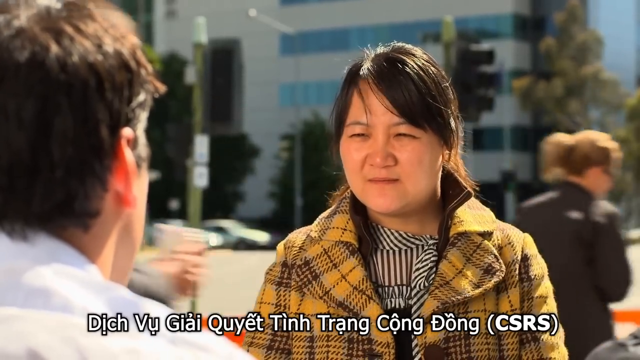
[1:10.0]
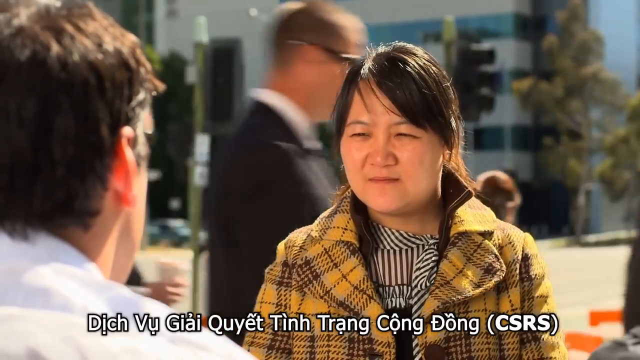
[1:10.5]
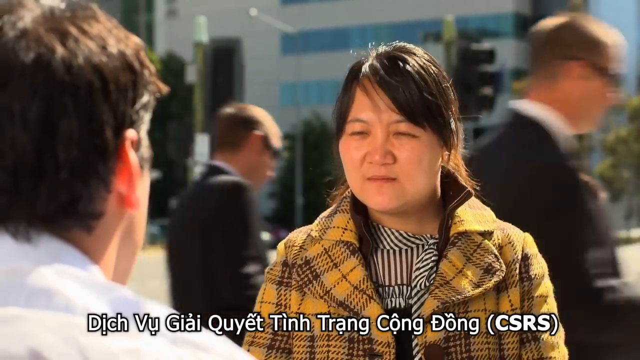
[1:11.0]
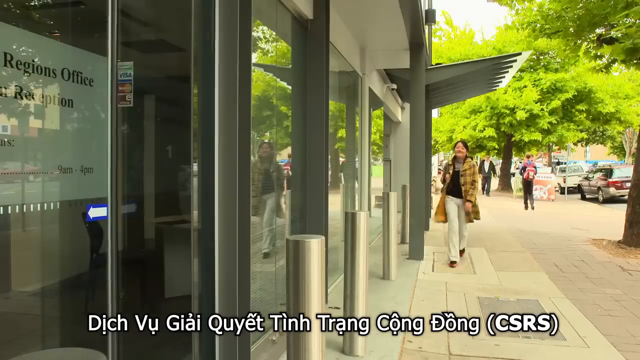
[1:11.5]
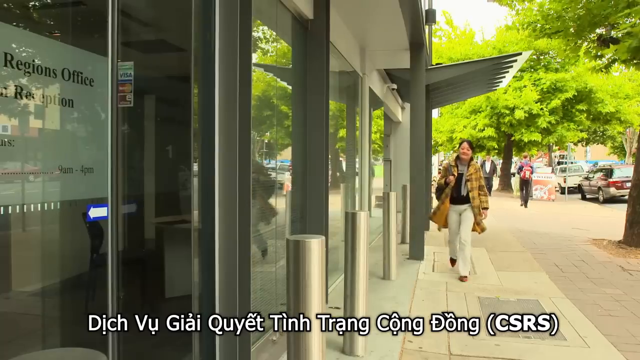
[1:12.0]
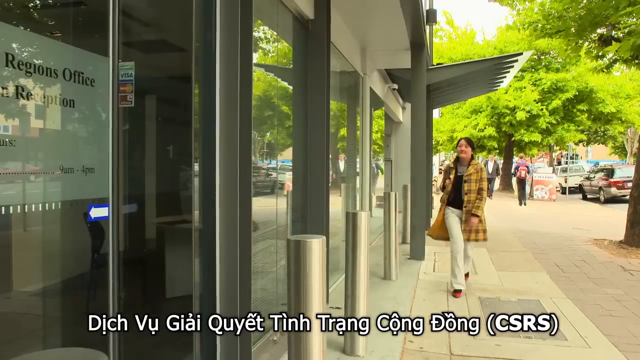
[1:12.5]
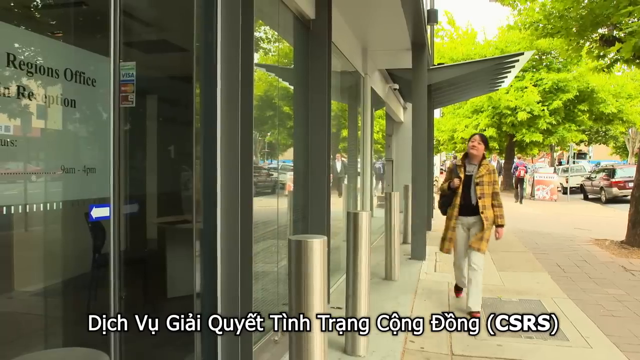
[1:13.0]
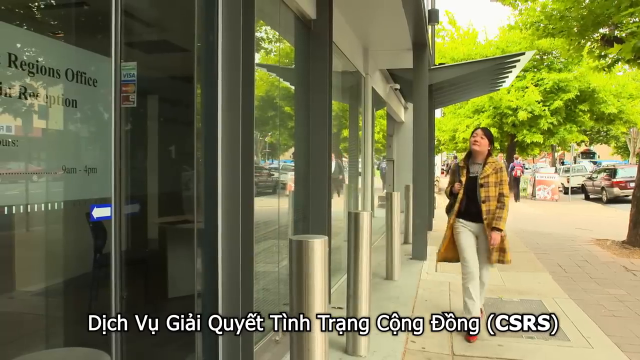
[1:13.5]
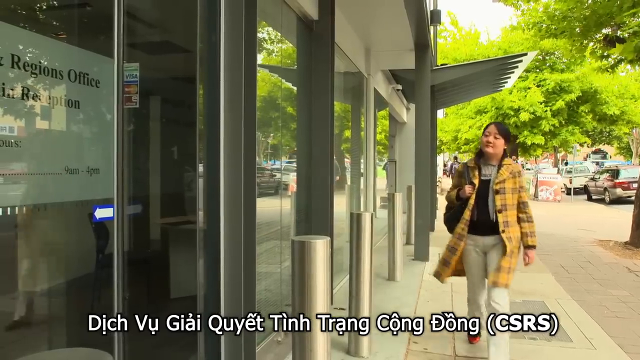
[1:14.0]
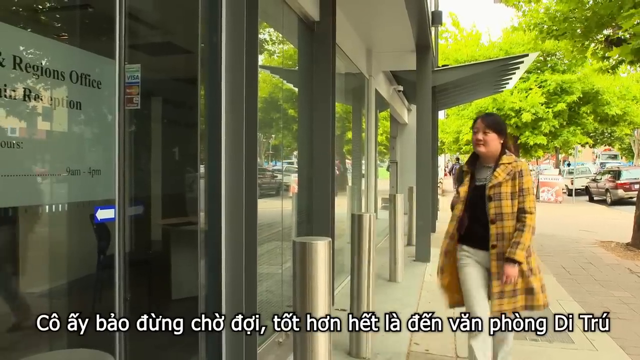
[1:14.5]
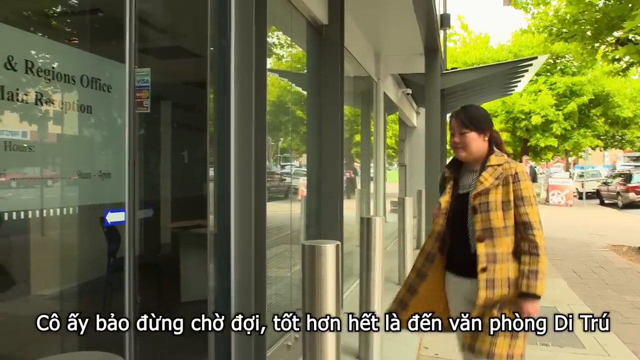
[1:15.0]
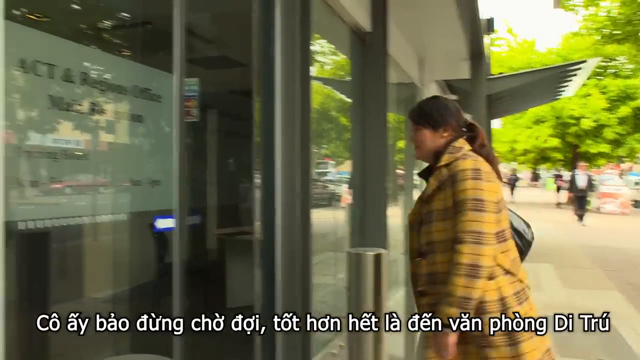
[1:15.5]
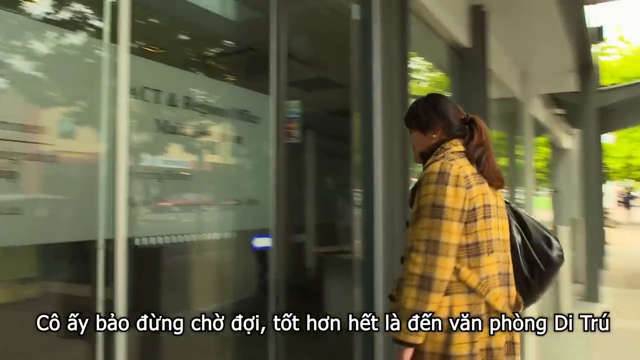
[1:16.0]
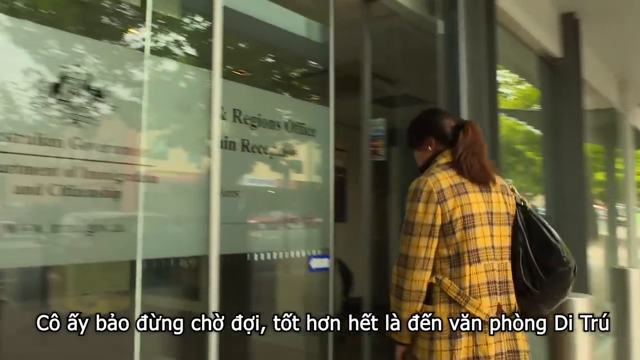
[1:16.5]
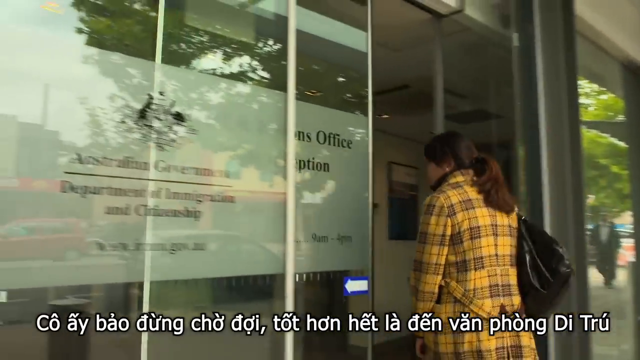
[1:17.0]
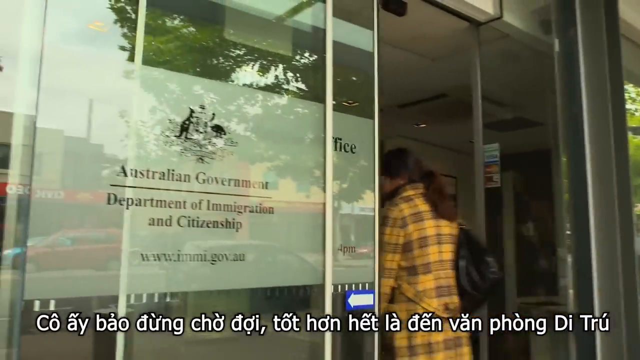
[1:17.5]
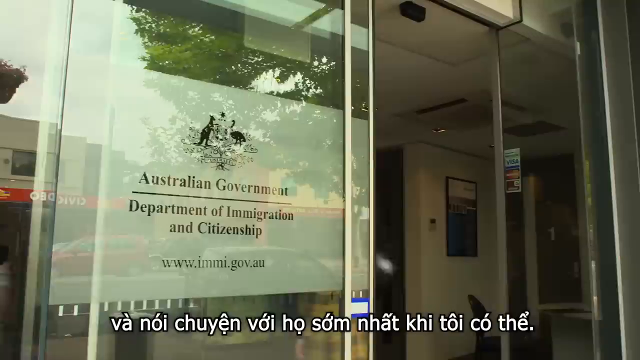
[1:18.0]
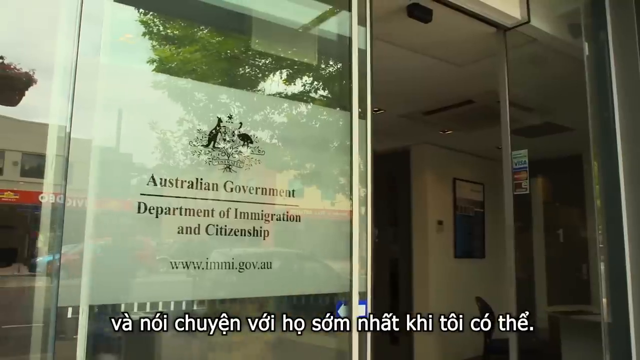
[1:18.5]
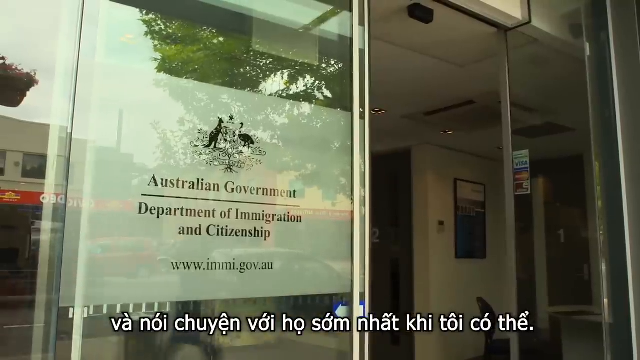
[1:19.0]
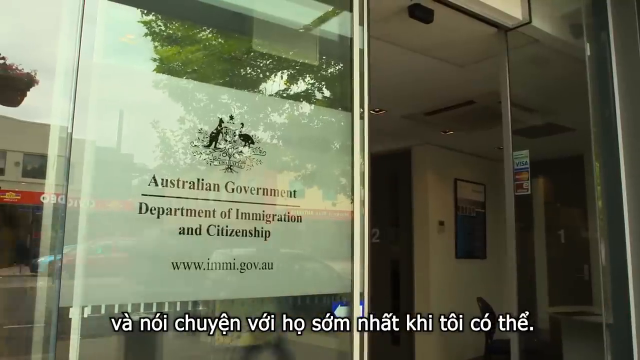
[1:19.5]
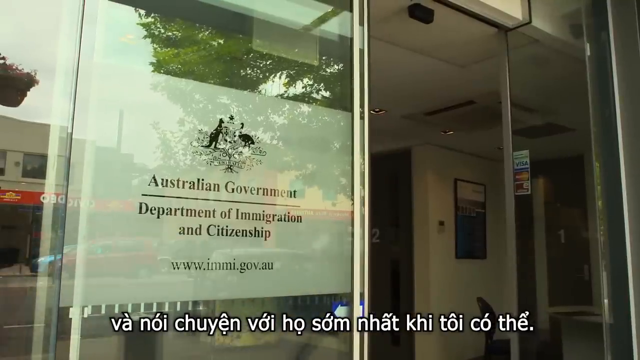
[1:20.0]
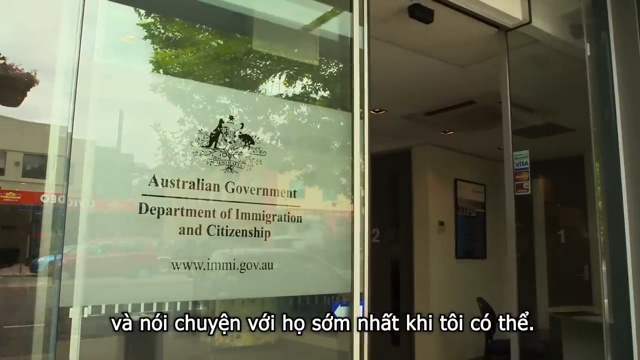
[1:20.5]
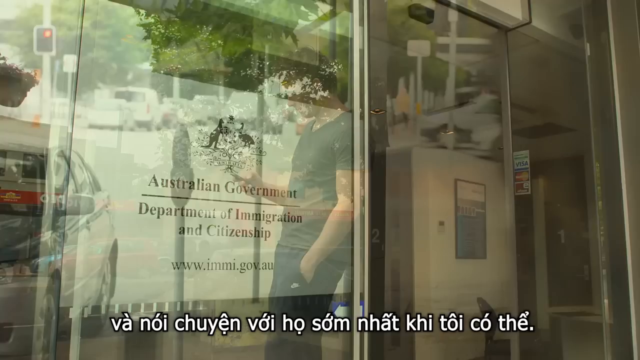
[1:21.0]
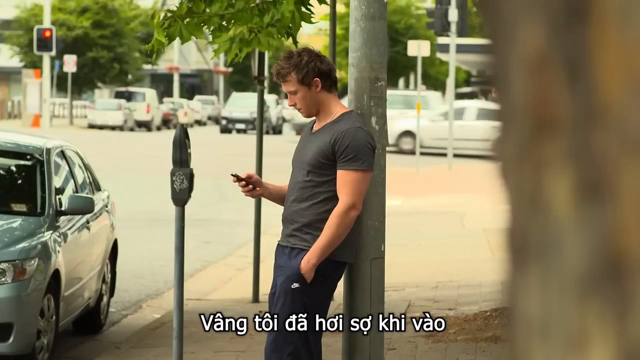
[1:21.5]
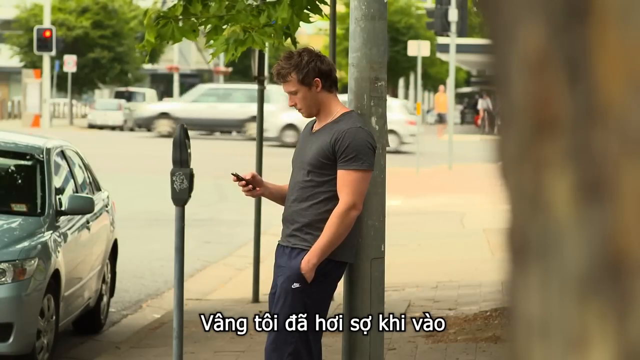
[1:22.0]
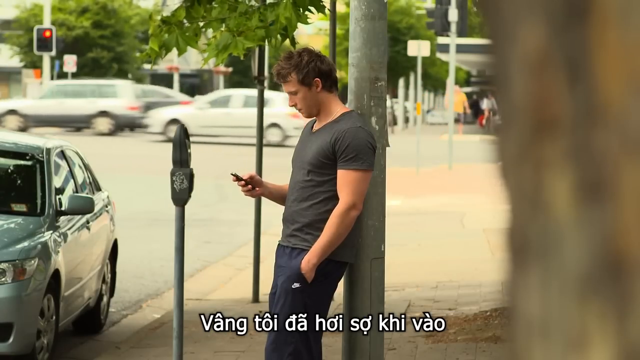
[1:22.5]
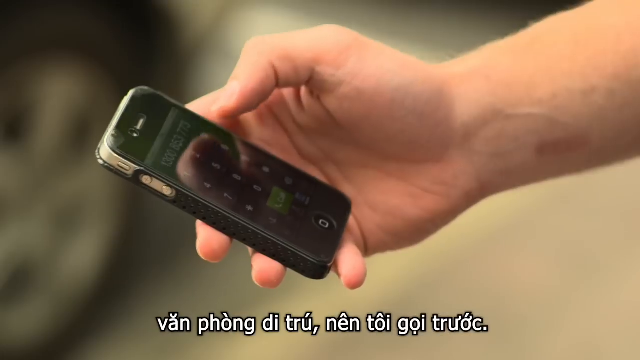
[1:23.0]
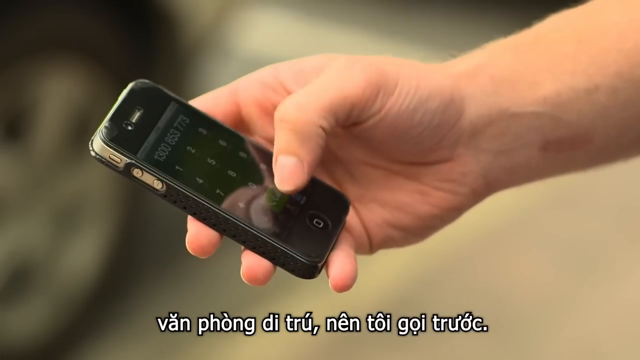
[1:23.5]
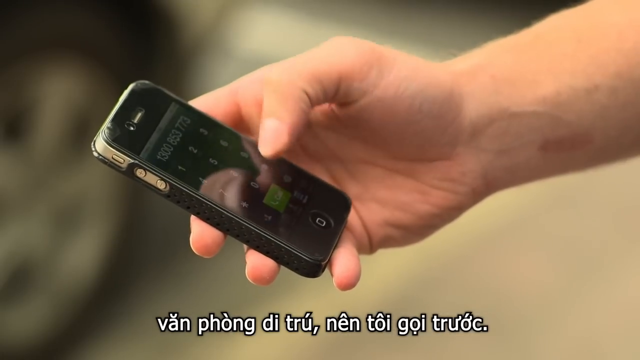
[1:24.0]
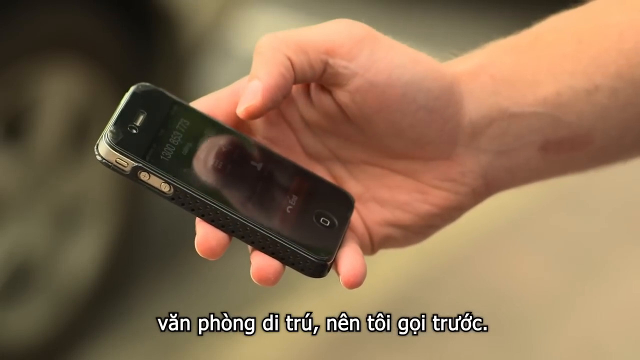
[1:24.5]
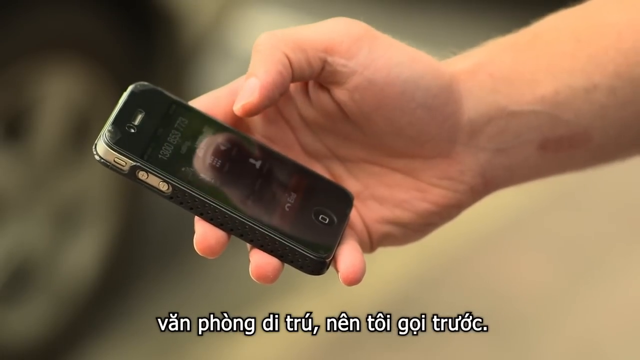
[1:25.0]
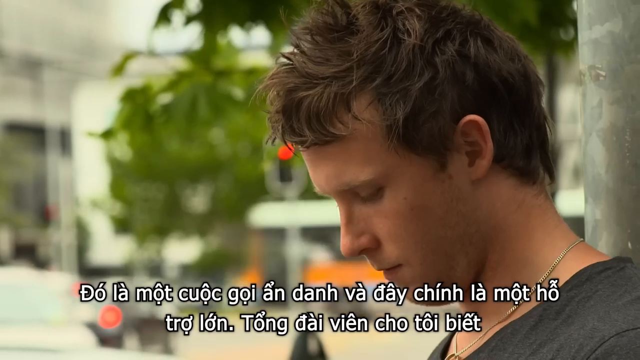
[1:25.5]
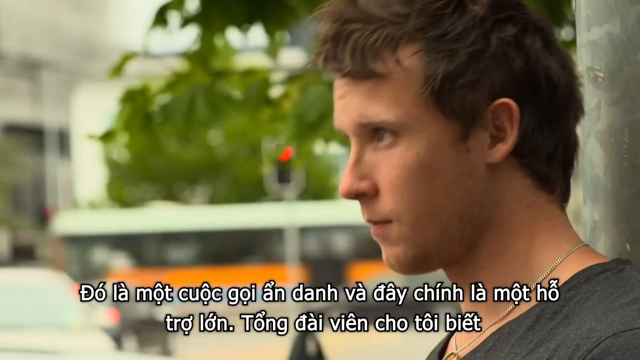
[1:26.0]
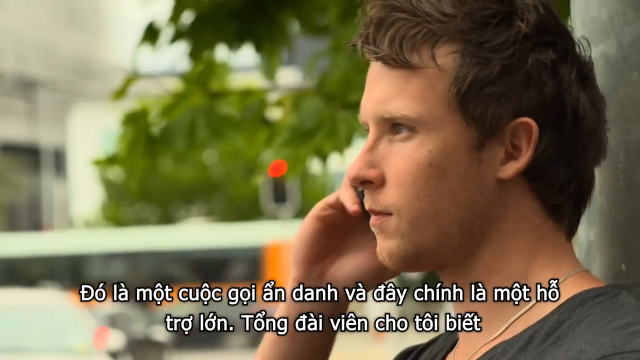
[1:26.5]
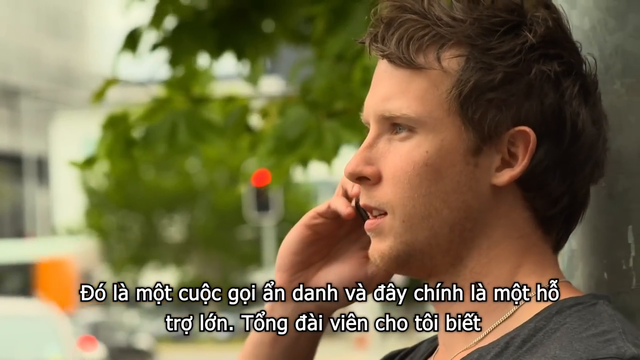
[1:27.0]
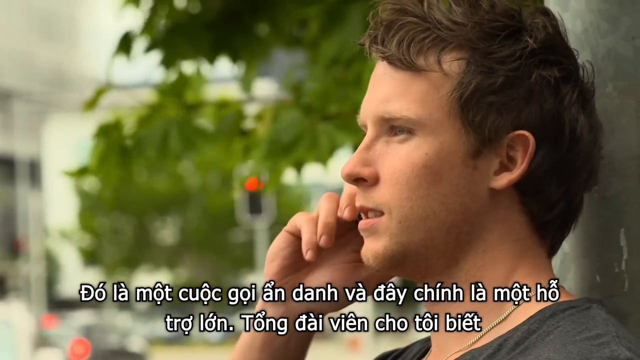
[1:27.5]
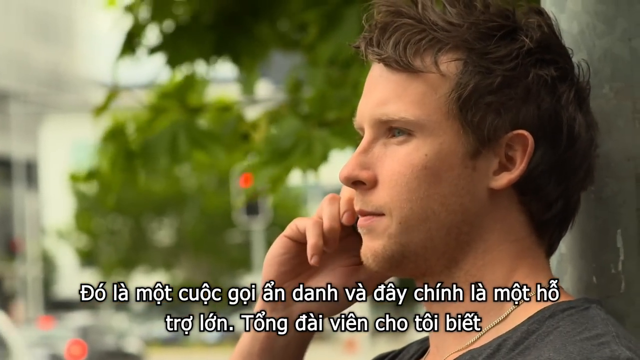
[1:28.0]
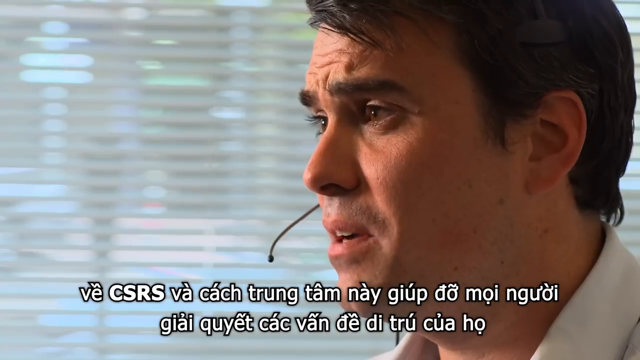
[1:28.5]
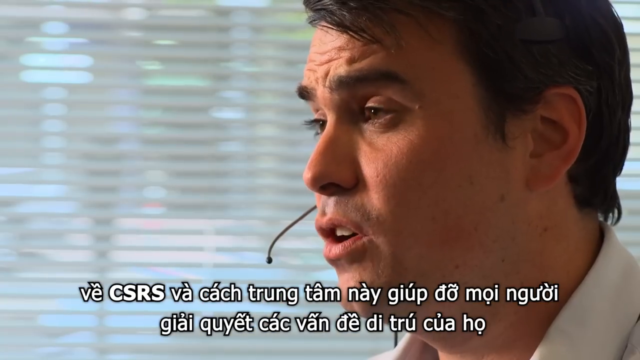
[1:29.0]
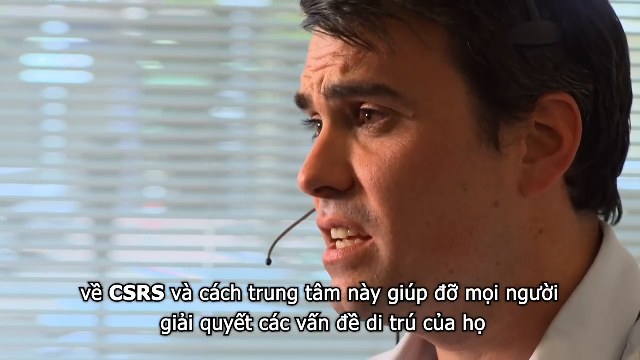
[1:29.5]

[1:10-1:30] Some kind of scarf is wrapped around her neck in different spots. At the top is a thinner border with diagonal black stripes, with what look like diagonal gray stripes behind it, crisscrossing a little, and below is a thicker band. The man can be seen nodding, his head tilting back and forth, and the shot fades away. The woman is then shown walking along a storefront on the left, with metal posts on its left side. She appears to wear light-colored khakis. She turns and walks to an office in Australia with electronic sliding doors; as she approaches, the door slides to the left and she goes through. Text on it reads "Australian Government, Department of Immigration, Citizenship", with a website underneath. On the pane of glass to the right of the door hang what look like Visa, MasterCard and some other payment signs. The same man from earlier leans against a post, looking down at his phone, with his left hand in his pocket. A close-up shows him entering a phone number; he looks up and starts calling someone. A telemarketer is shown with a curved mouthpiece coming off from his right side.